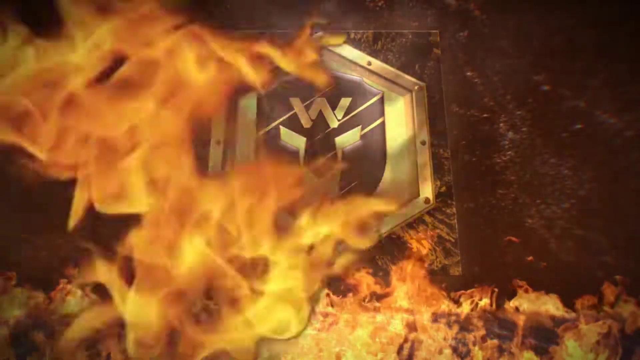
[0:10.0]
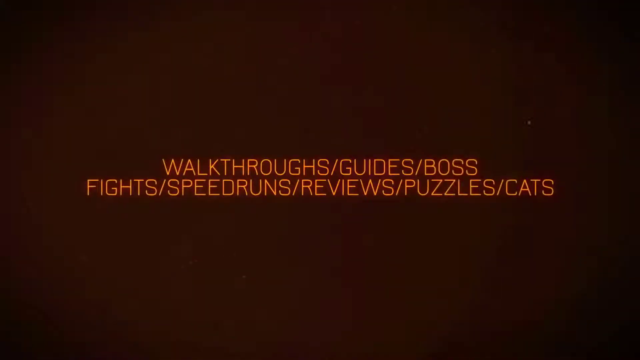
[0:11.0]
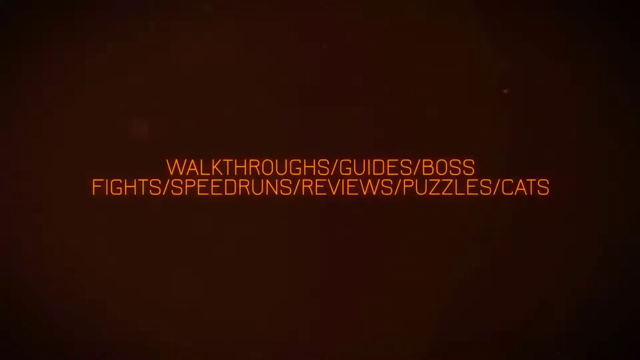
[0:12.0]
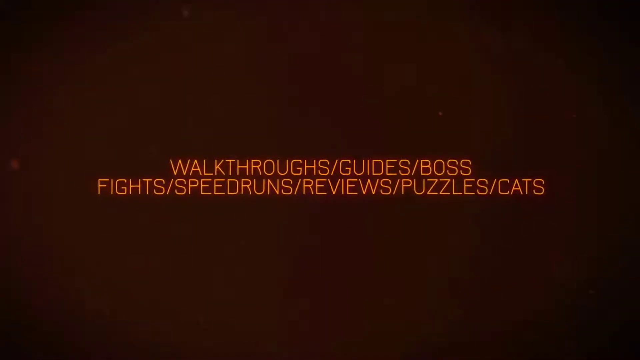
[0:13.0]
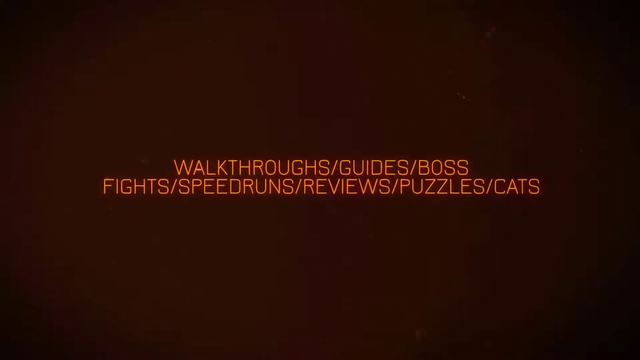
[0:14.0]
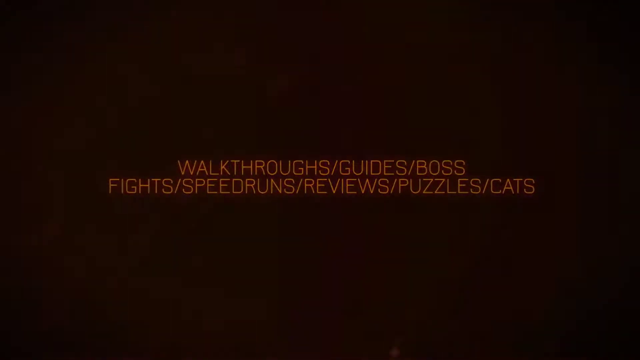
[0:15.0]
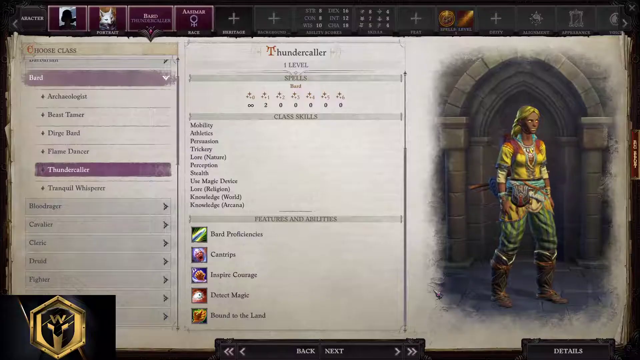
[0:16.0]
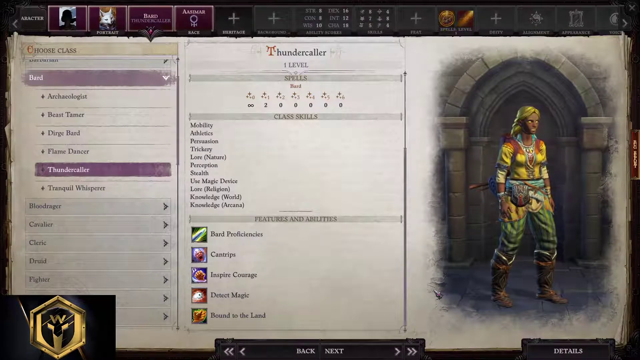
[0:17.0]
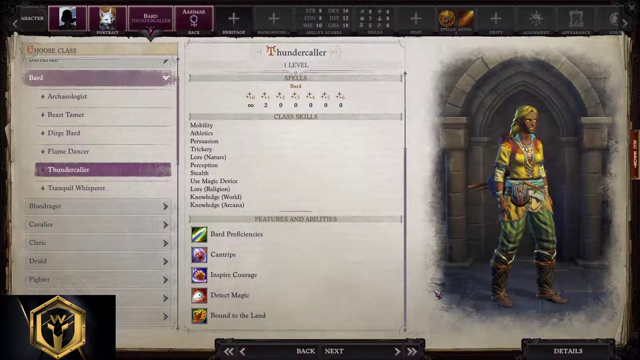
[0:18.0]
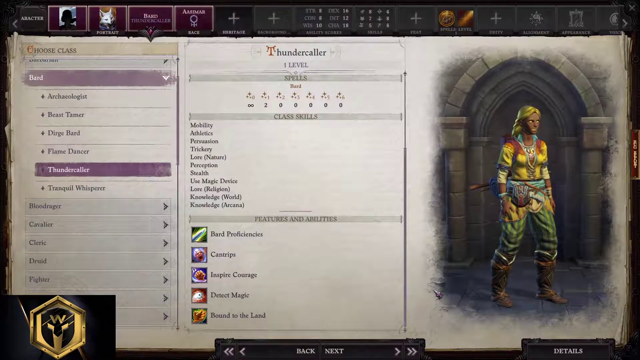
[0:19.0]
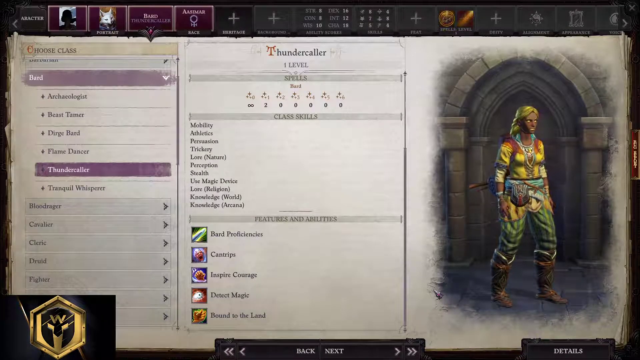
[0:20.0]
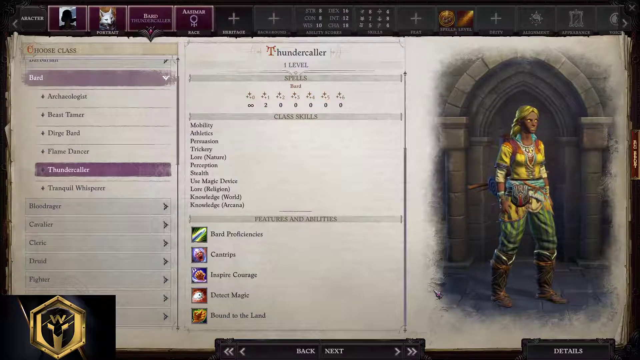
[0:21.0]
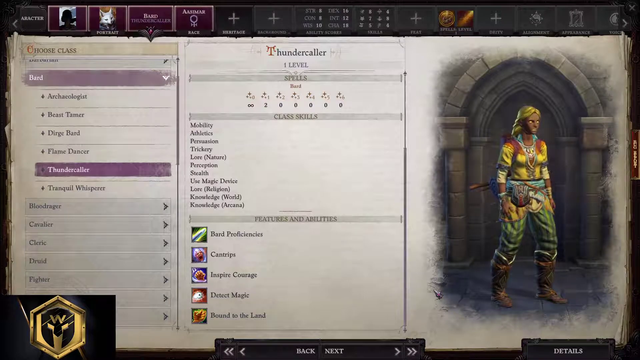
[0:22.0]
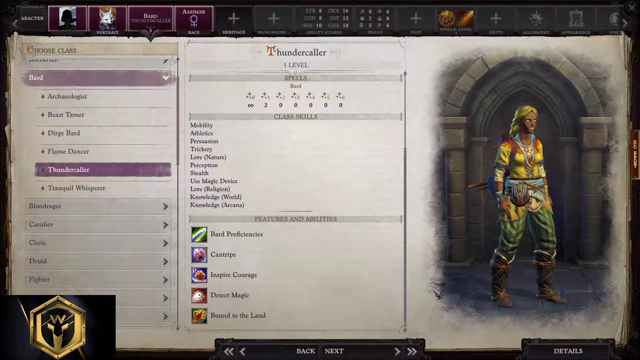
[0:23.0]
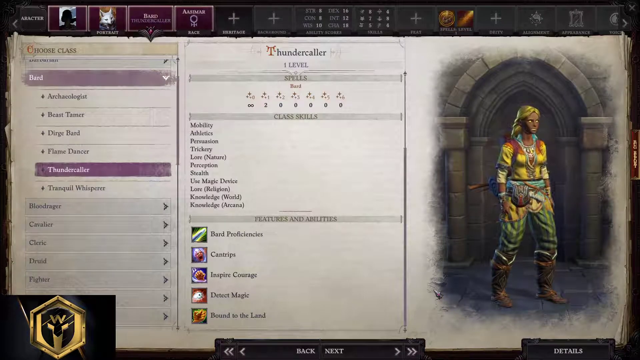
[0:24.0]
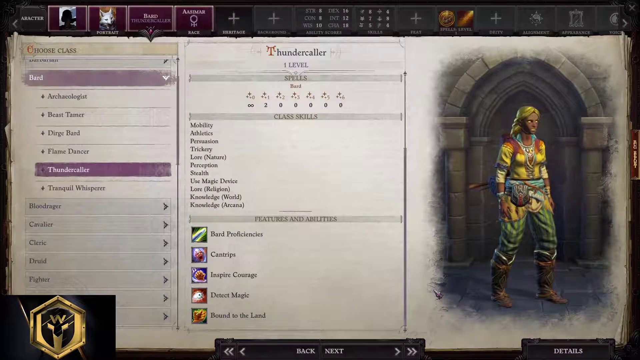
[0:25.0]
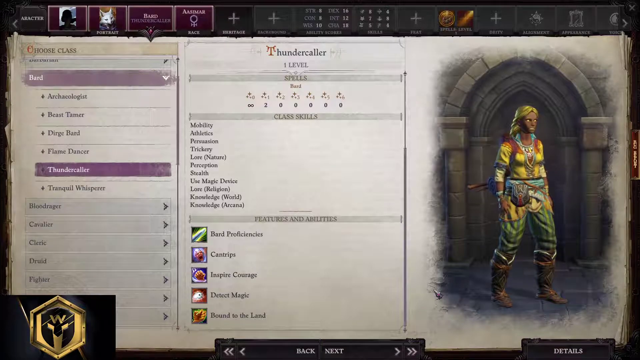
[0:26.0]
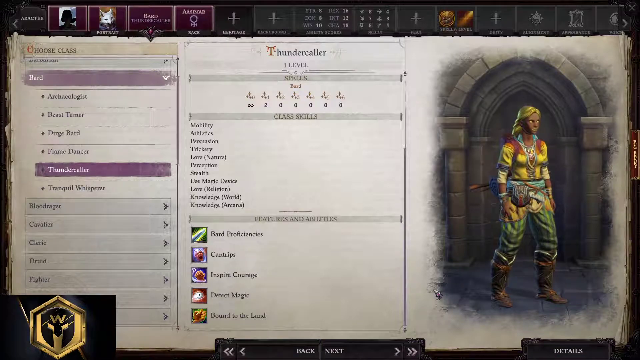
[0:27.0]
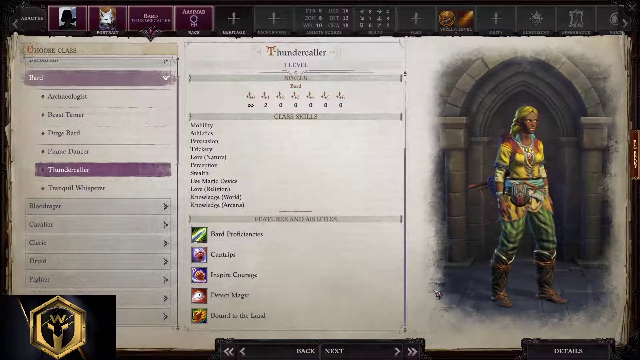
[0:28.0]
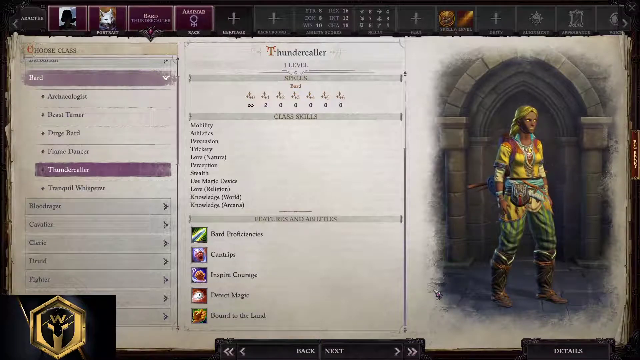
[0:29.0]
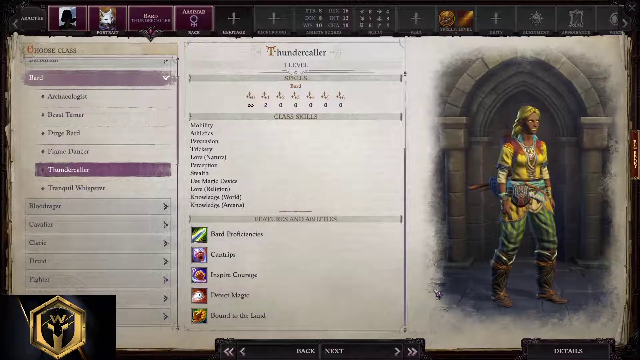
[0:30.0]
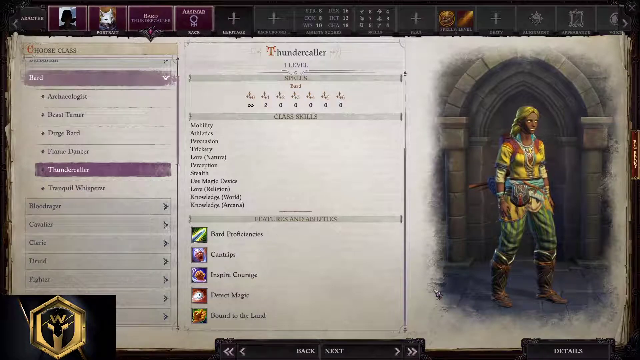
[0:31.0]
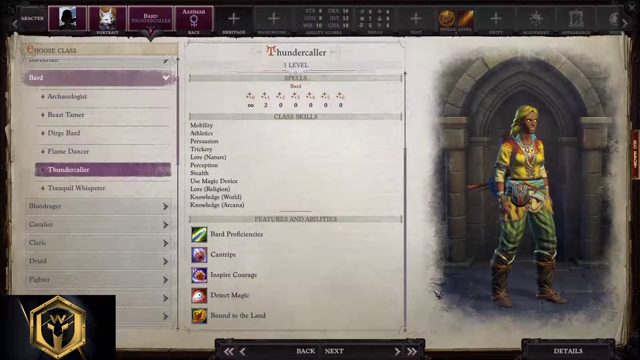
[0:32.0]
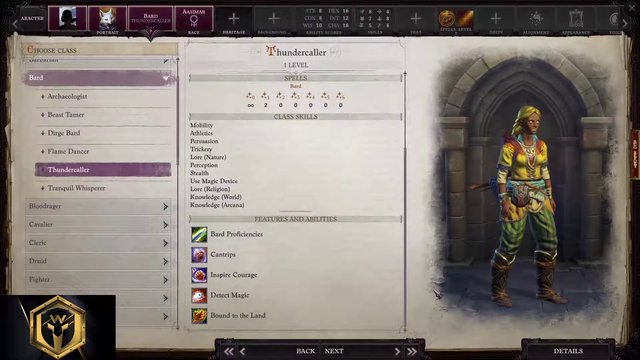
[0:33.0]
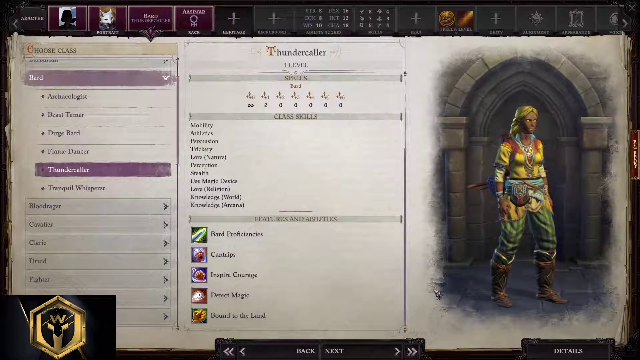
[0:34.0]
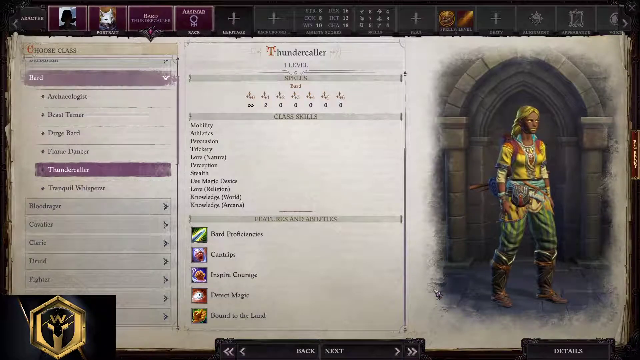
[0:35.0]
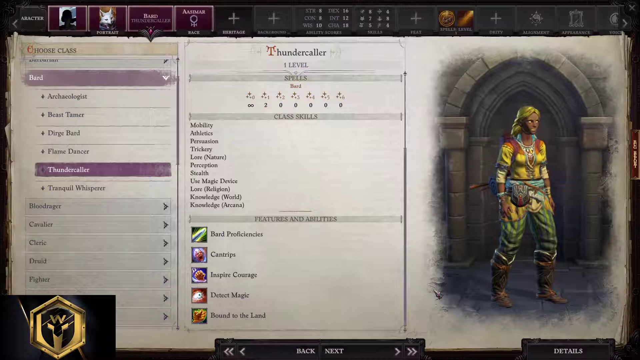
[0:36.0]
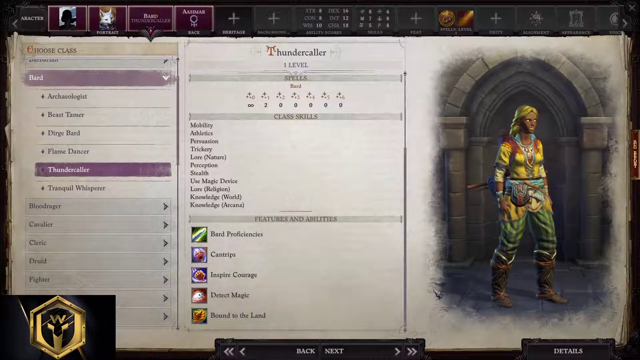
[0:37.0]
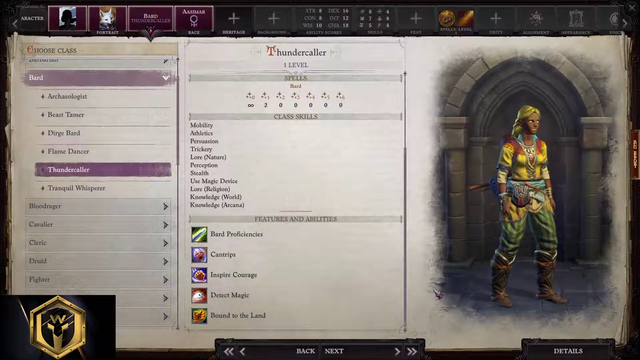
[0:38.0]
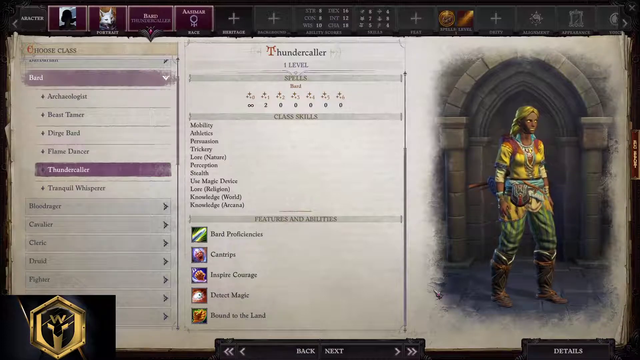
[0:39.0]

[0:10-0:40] Fire blazes across the screen, then the screen goes black and orange letters read "walkthroughs / guides / boss fights / speedruns / reviews / puzzles / cats", each separated by a slash. The screen kind of goes dark, and a screen with many options appears. It shows an avatar and the text "thundercaller, one level", along with "spells" and "choose class", listing bard, archaeologist, beast tamer, dirge bard, flame dancer and thundercaller, with thundercaller chosen. An area for class skills lists mobility, athletics, persuasion, trickery, lore nature, perception, stealth, use magic device, lore religion, knowledge world and knowledge arcana, and a features and abilities section lists bard proficiencies, cantrips, inspire courage, detect magic and bound to the land. Along the top are many other areas for choosing options.